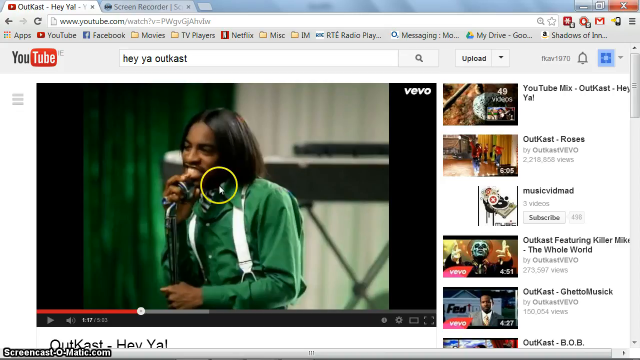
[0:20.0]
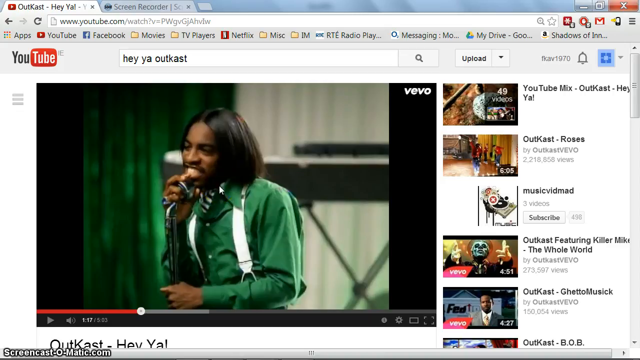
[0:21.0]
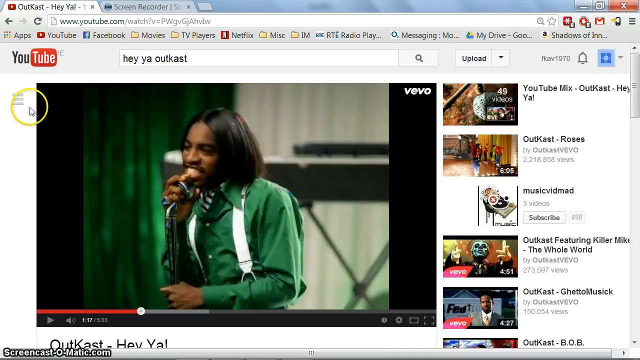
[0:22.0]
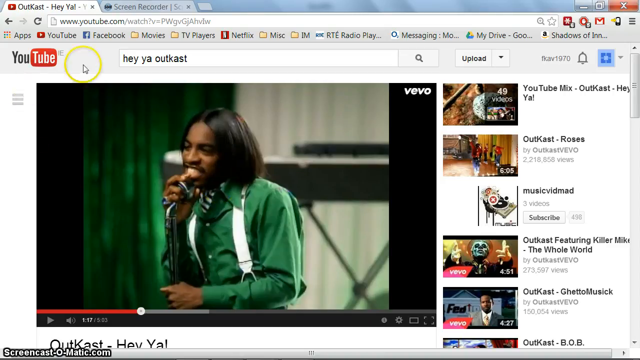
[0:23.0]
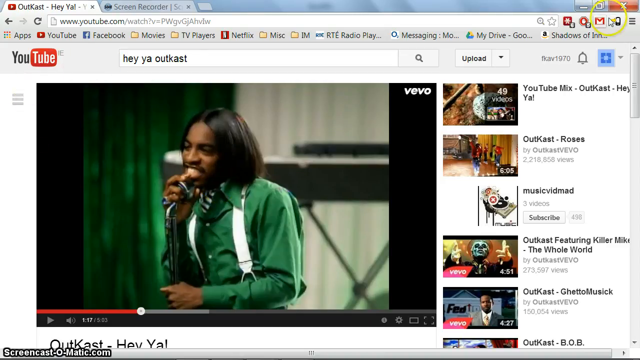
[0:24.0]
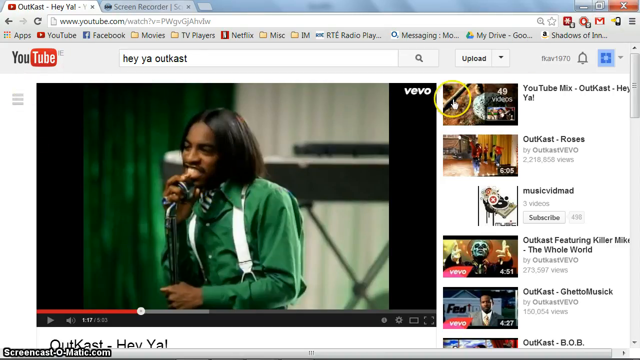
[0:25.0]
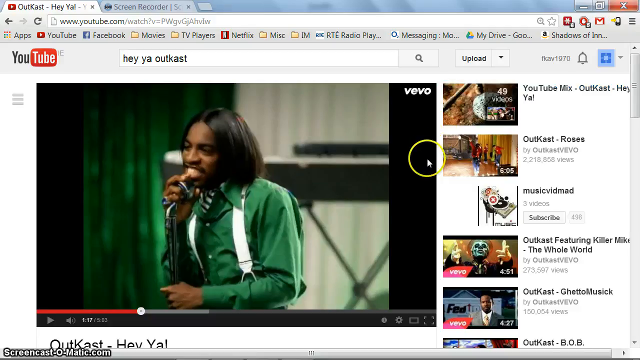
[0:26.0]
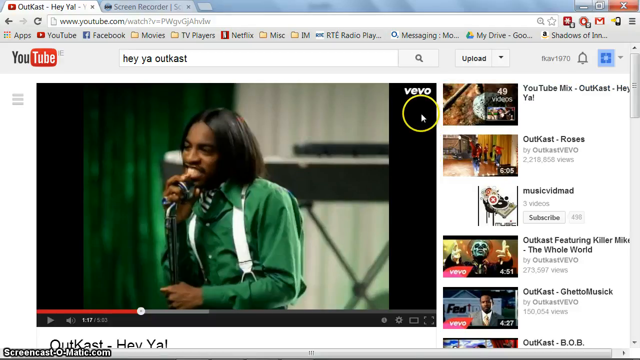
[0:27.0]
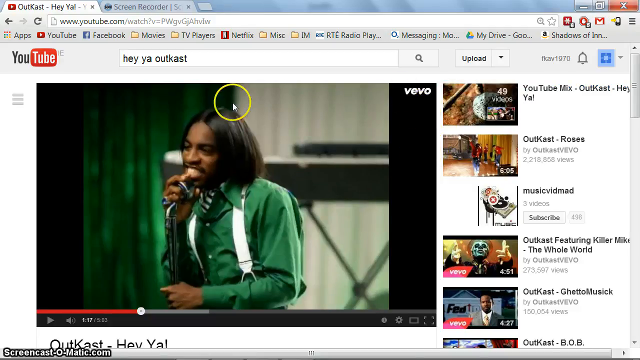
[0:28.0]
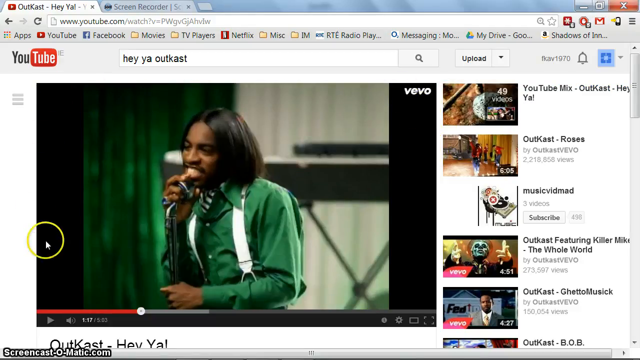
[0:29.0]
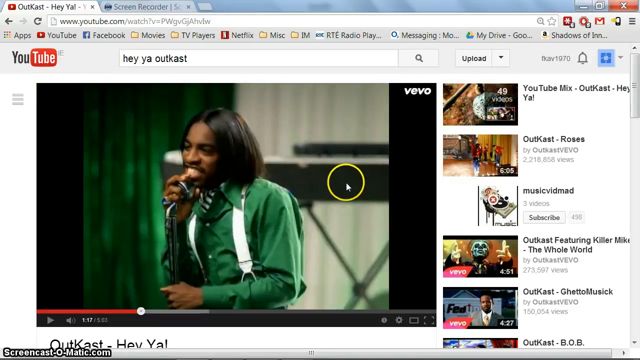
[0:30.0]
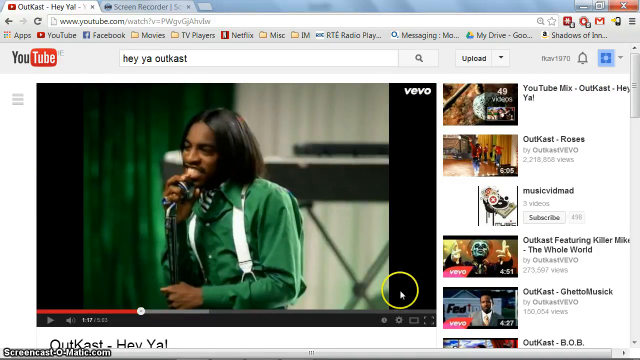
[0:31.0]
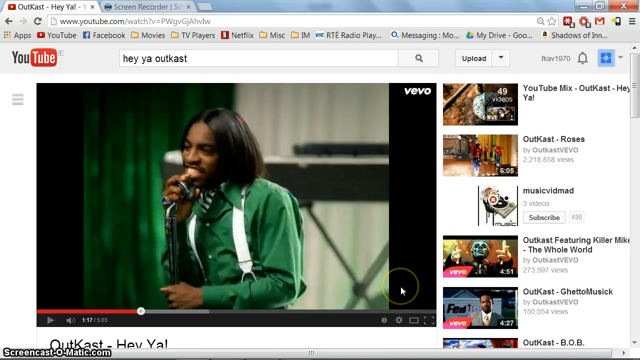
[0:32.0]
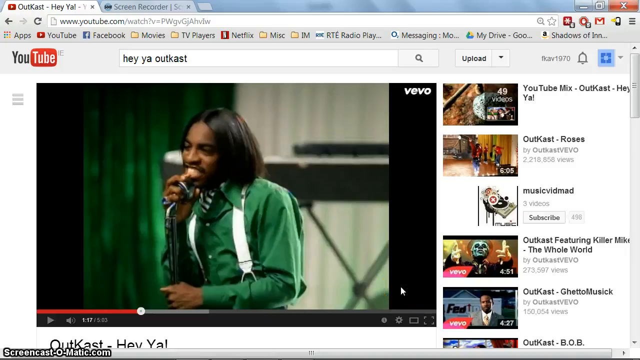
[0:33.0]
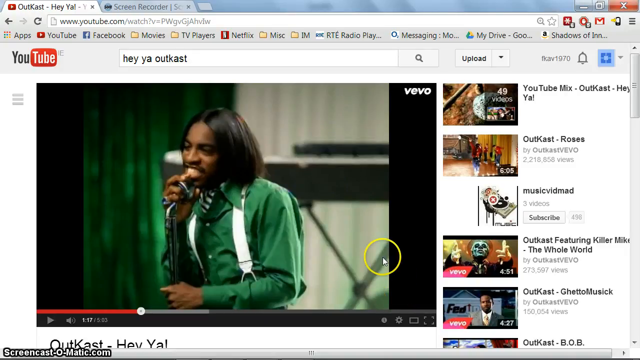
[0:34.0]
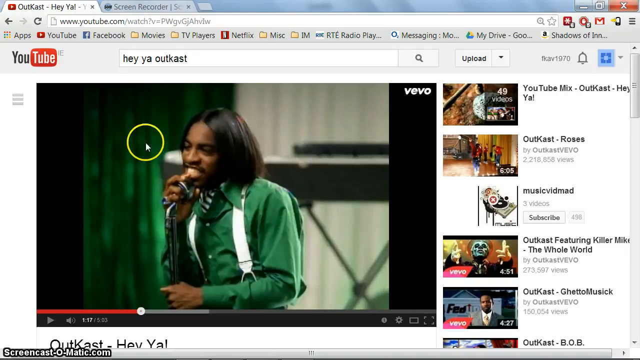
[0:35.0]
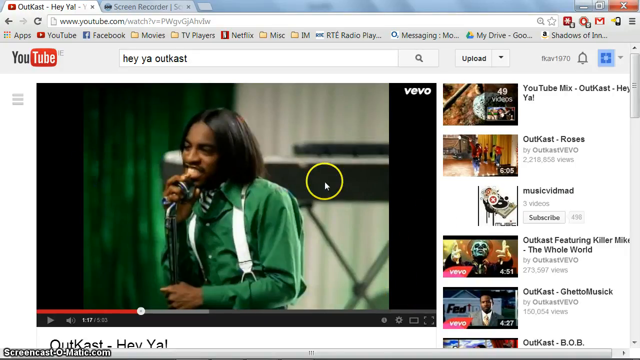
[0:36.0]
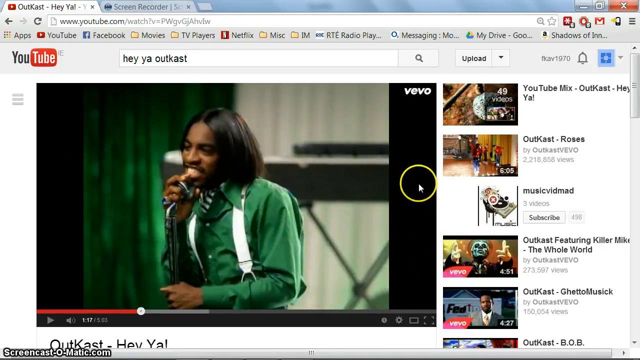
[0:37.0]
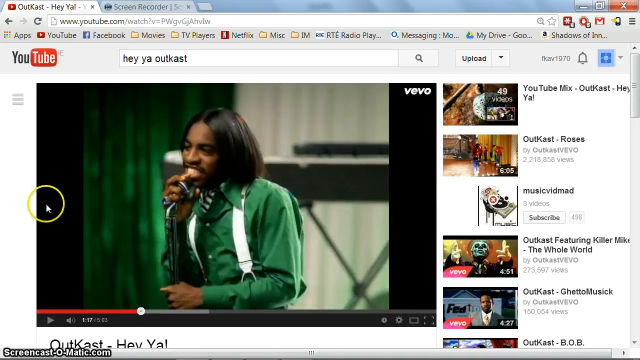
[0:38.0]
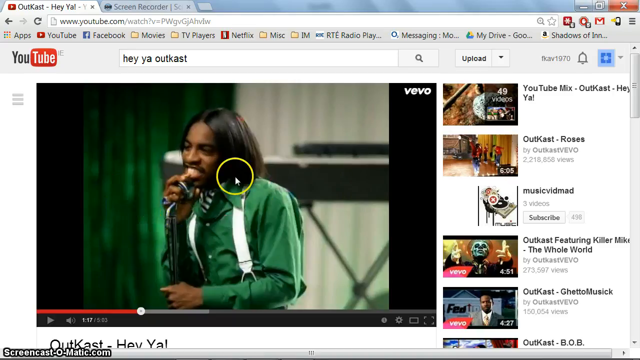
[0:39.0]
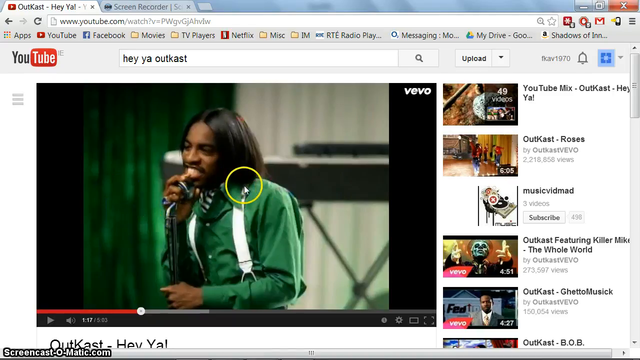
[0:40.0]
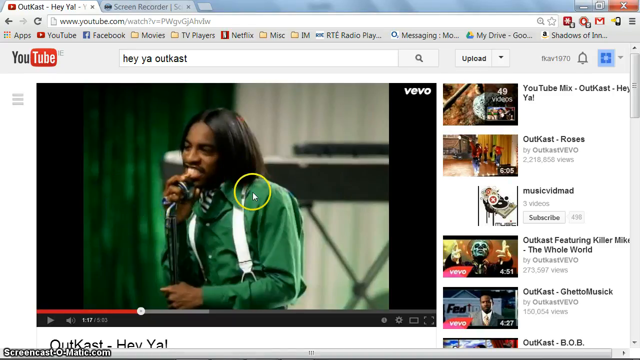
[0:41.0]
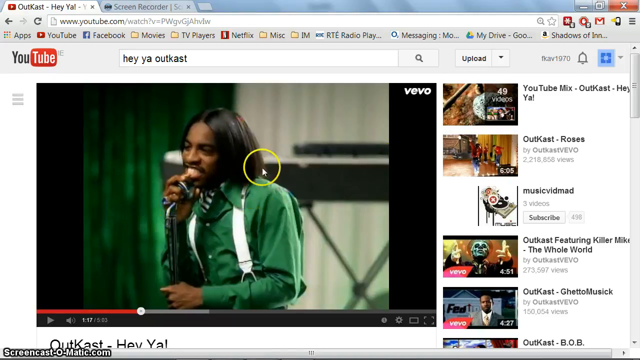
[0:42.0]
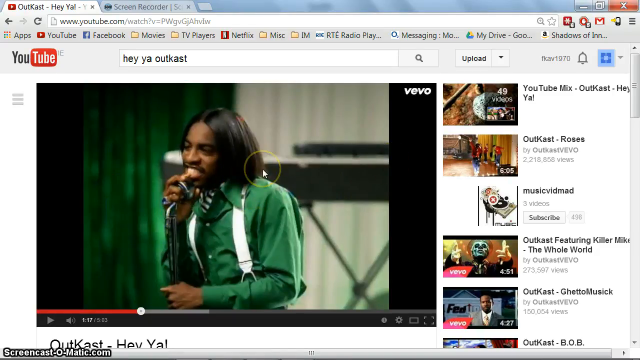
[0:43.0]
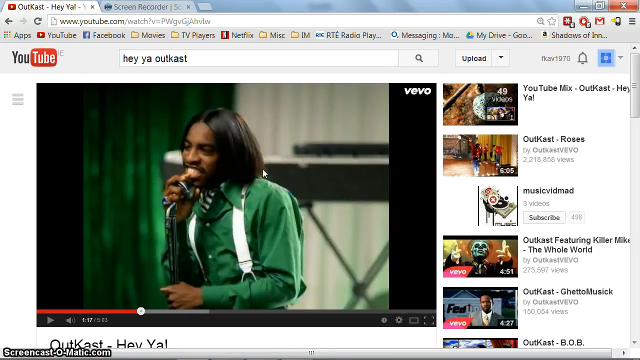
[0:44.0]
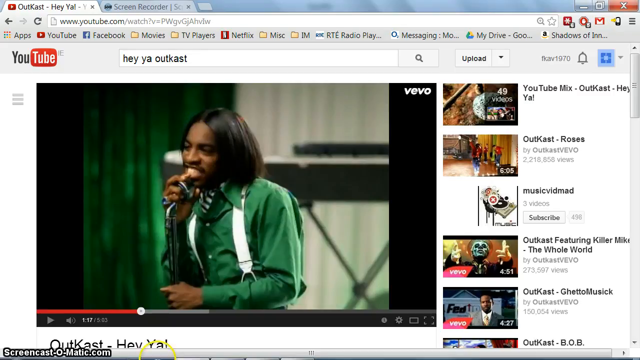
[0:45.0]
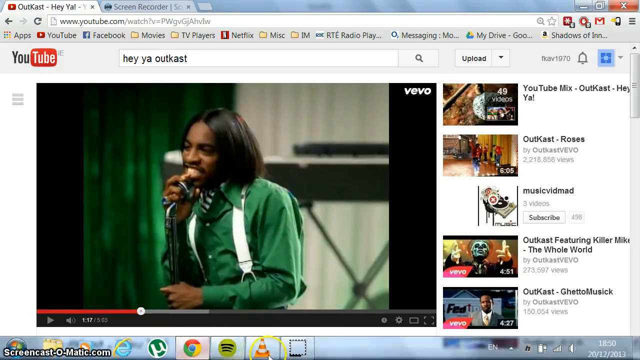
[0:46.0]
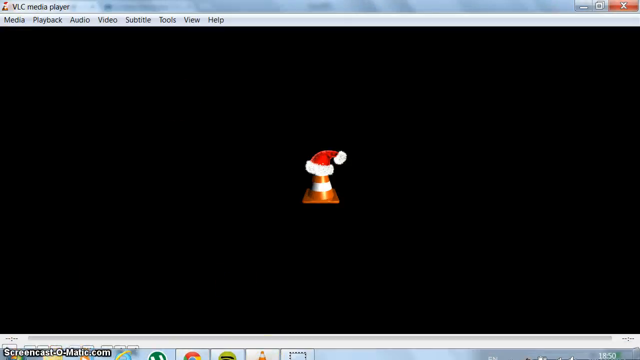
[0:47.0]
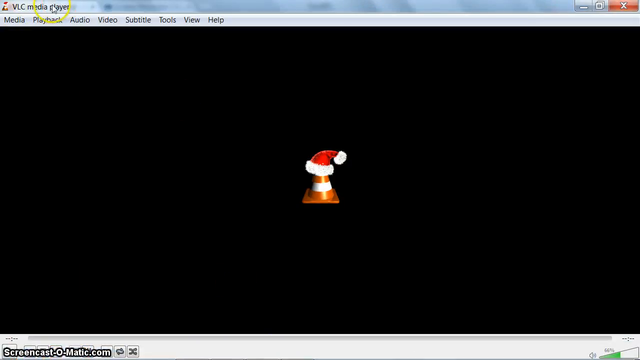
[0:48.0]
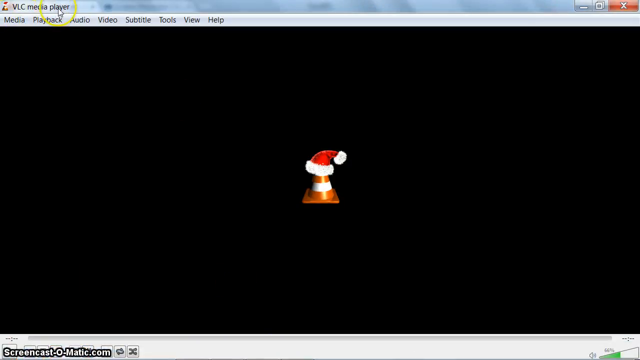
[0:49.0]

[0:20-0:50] A YouTube page is open in a web browser, with the screen recorder browser open behind it. The cursor has a highlighted yellow circle outline and is dragged around the YouTube page. It first kind of highlights the singer and shows that it is a "Vevo" video, then hovers over some of the YouTube video controls, moving back and forth a bit erratically. The cursor then moves down to the toolbar, where the icon for a media player is an orange traffic cone, and opens that media player. The YouTube video shows a frozen shot from the Hey Ya! music video of lead singer Andre 3000 in an all-green button-up long-sleeve shirt with white suspenders and a striped bow tie.